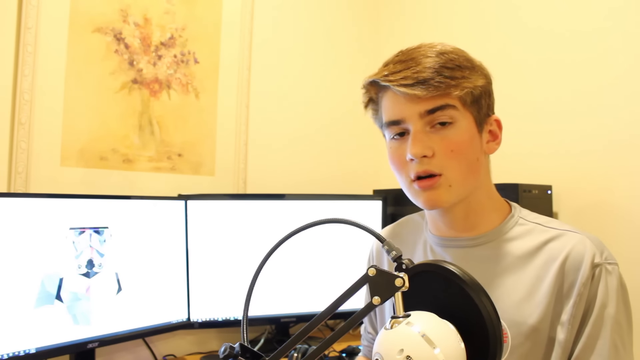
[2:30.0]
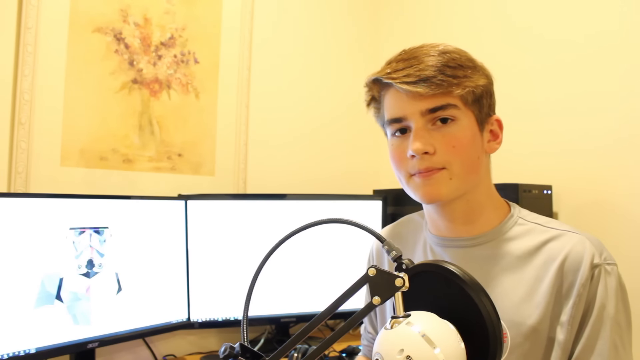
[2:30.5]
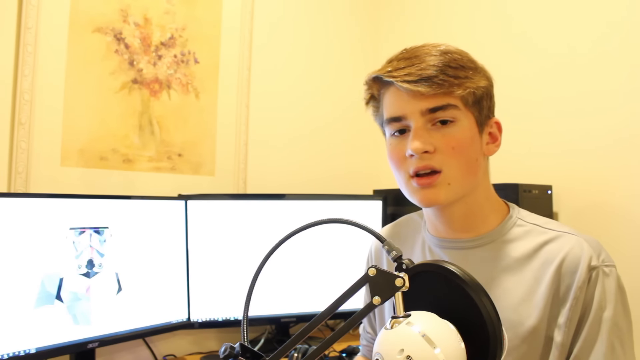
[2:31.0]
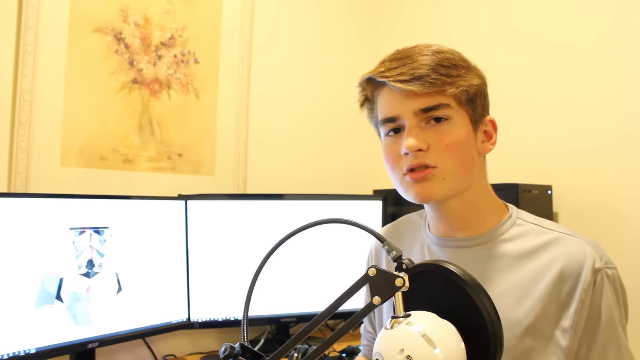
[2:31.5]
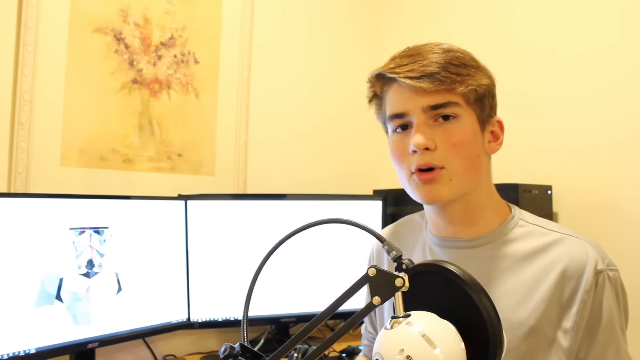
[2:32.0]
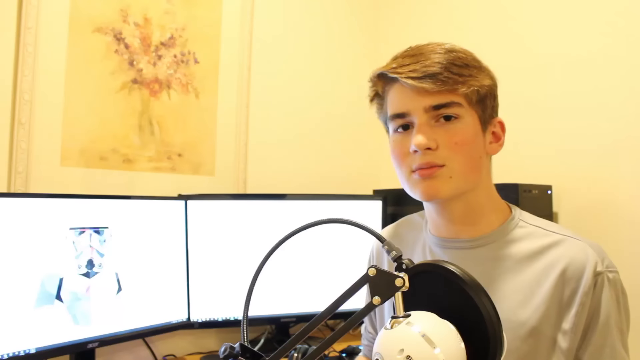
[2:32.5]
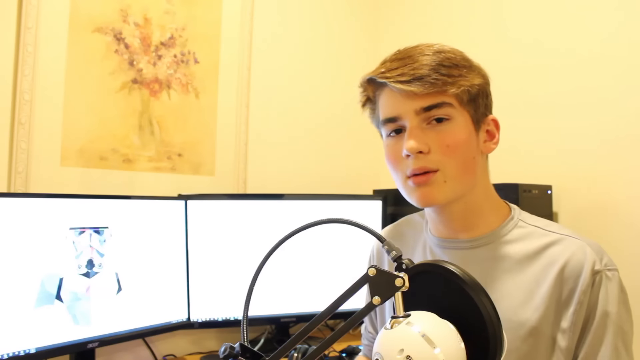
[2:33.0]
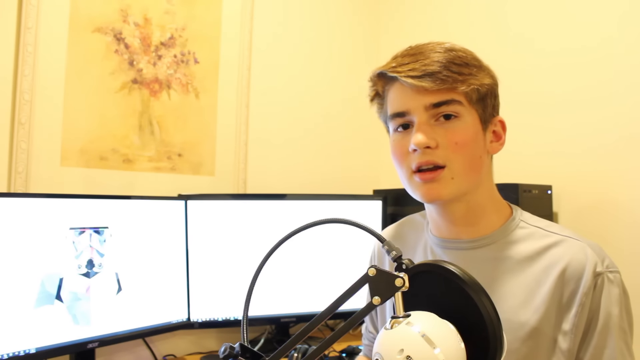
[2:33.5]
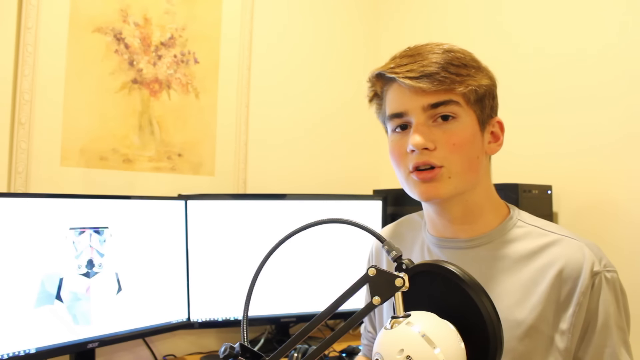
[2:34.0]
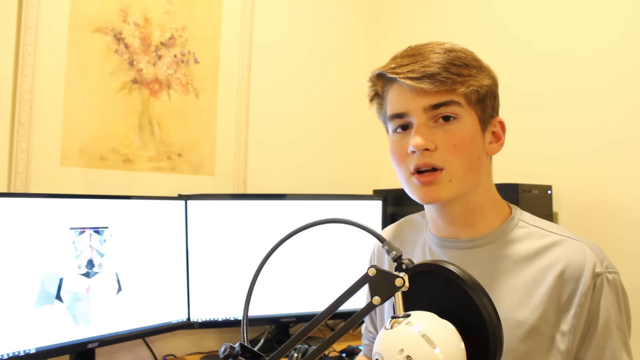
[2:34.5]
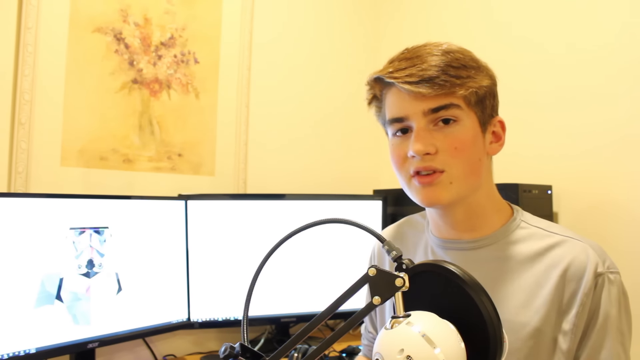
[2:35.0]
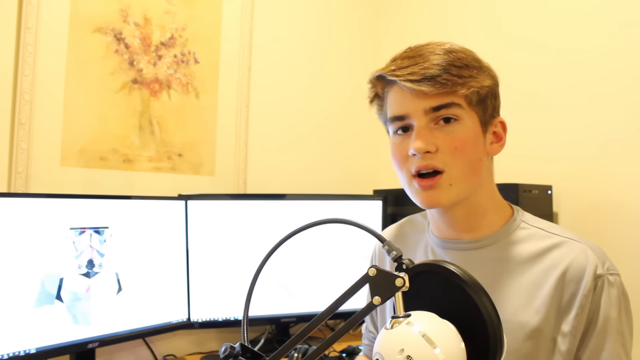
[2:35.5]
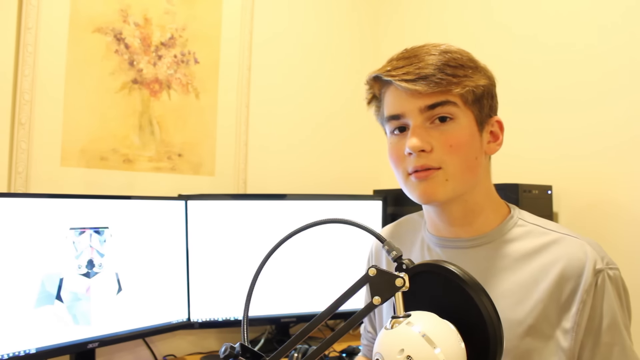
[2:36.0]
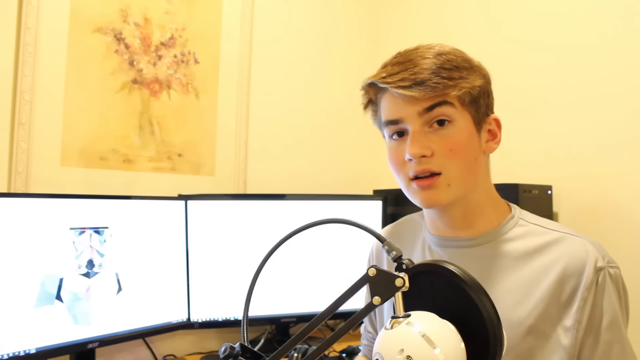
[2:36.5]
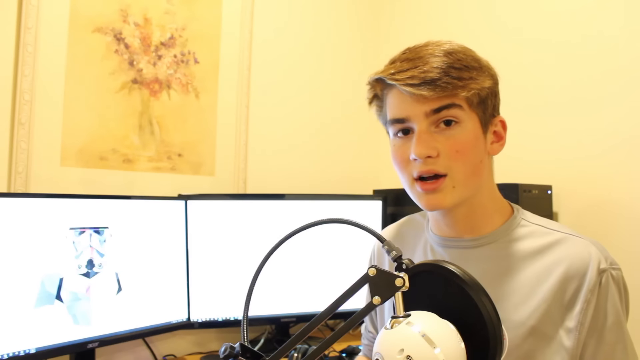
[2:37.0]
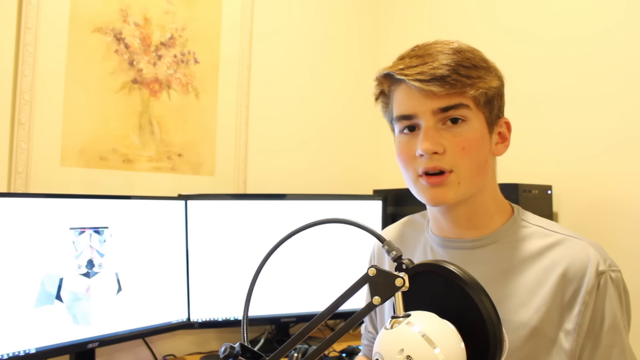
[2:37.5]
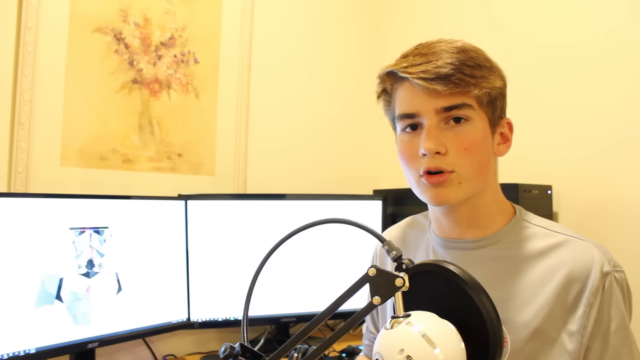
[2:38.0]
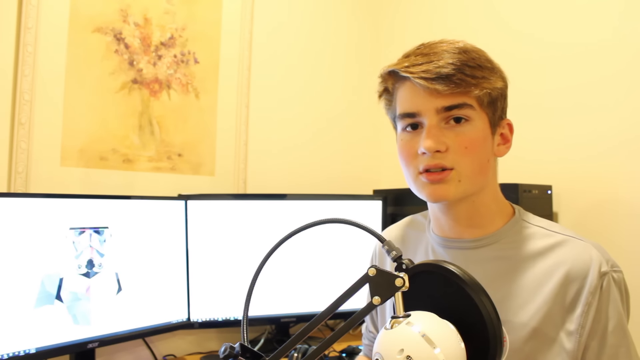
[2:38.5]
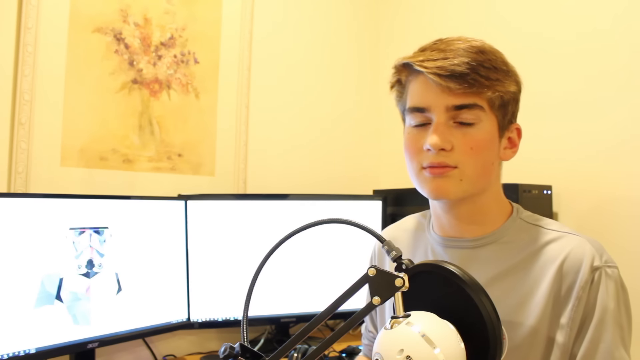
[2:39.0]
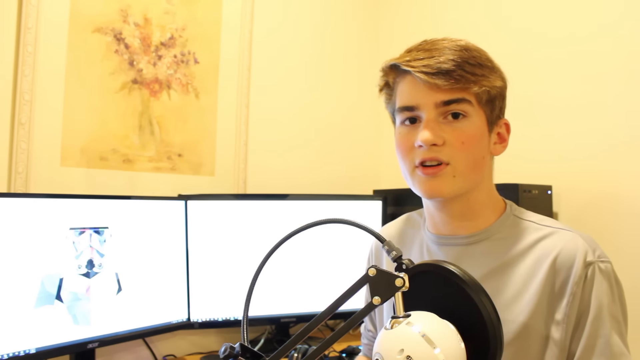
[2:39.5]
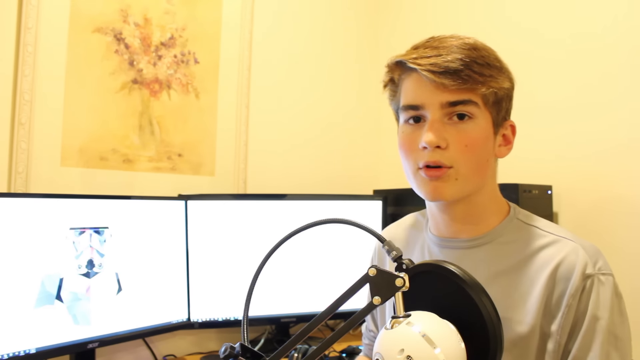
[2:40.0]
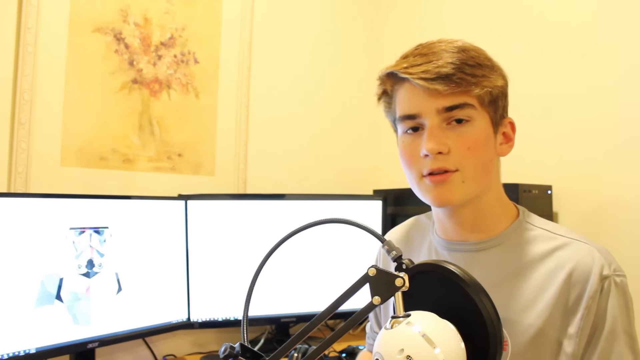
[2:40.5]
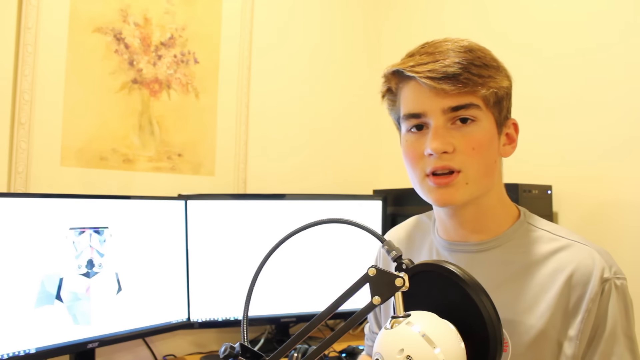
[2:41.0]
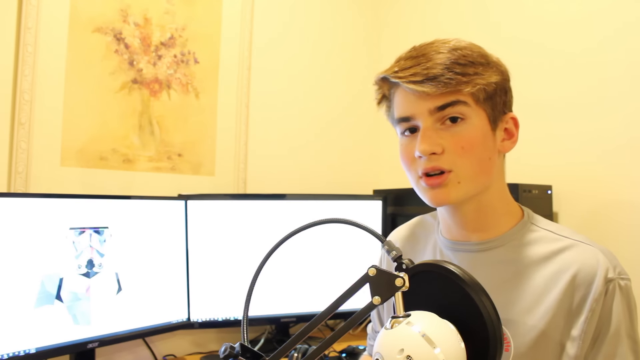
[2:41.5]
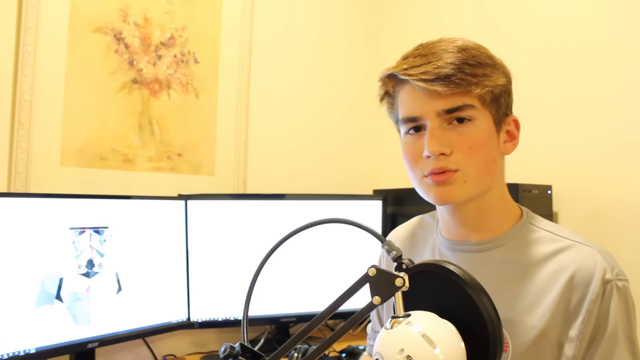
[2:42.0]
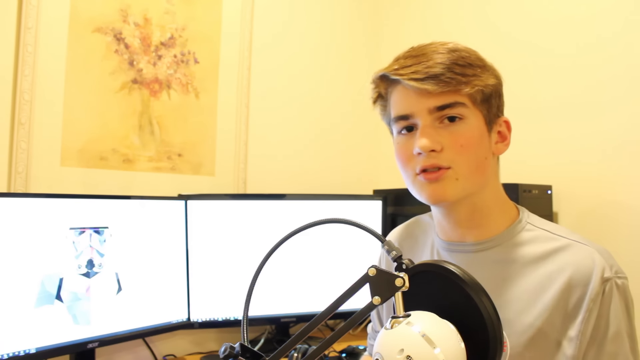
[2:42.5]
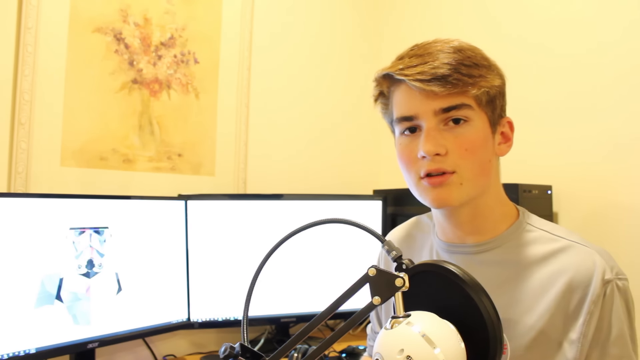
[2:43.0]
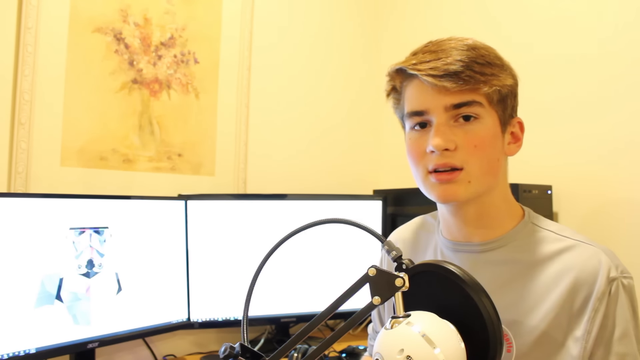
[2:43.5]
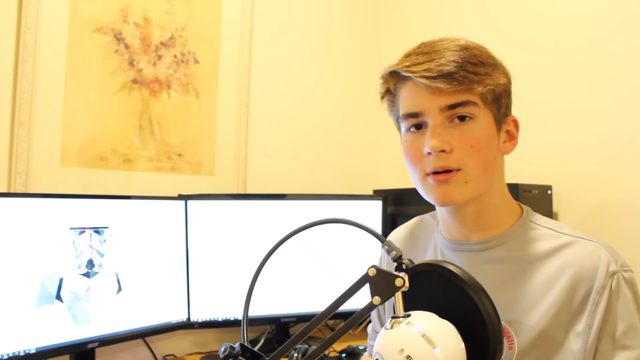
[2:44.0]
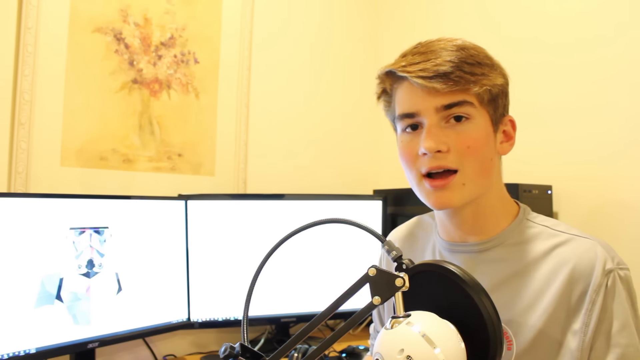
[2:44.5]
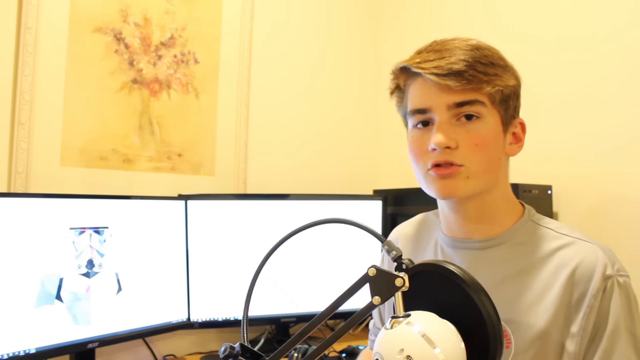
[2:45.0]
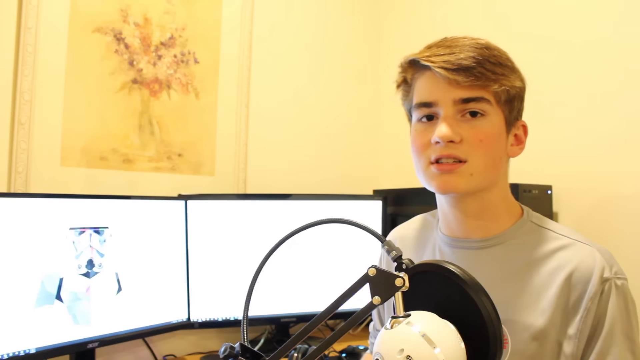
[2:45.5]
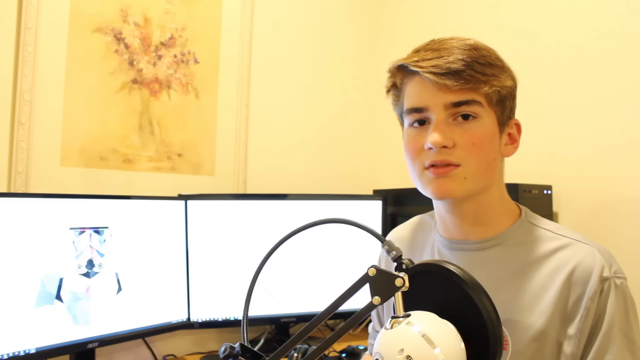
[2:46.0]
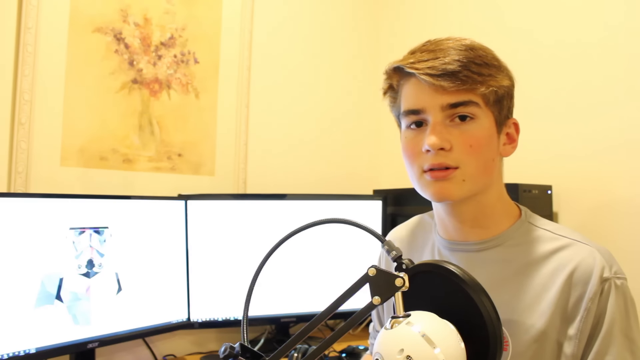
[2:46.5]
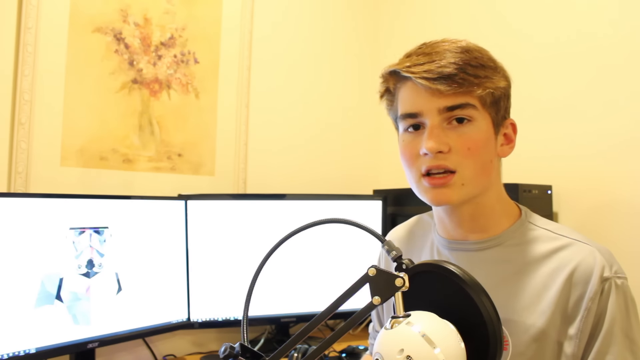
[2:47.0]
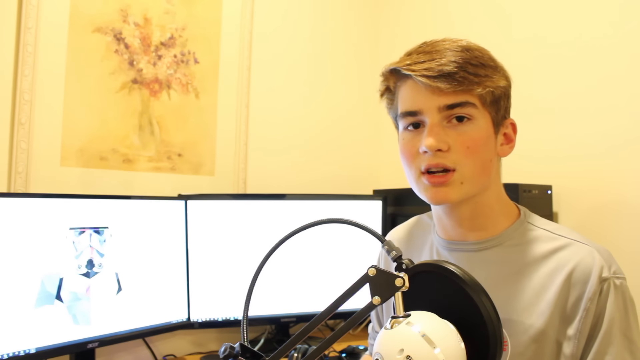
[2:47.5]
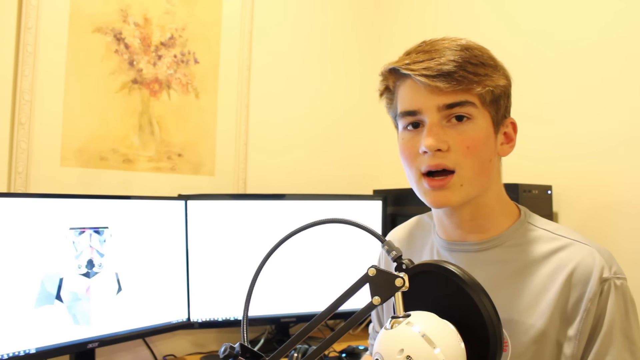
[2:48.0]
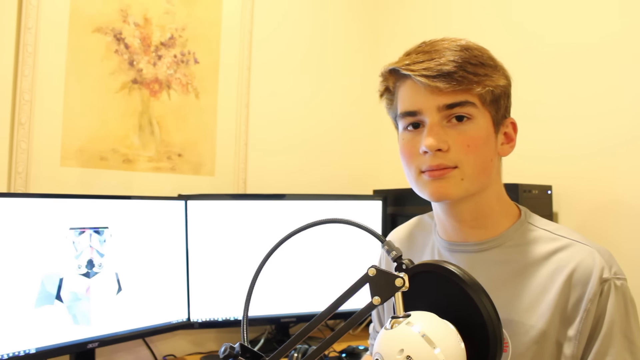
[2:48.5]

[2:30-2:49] A young white man speaks while looking directly at the camera, maintaining eye contact throughout without looking away. He sits fairly still, raises his eyebrows a little, and gestures slightly with his head, but his expression stays fairly neutral as he speaks steadily; his hands are not visible. Behind him, two computer monitors are on a desk that looks like it is made of wood. Both monitors are washed out by the light and hard to see: one might have a stormtrooper as its desktop background, while the other looks completely white, and the start menu and toolbar icons are faintly visible at the bottom of the screen. Some kind of black computer console is on the right side of the monitors. The walls in the back are pale yellow, and on the left side is a painting of flowers in a vase, which looks purple and maybe yellow and red, in muted, soft colors like a pastel painting. The vase is clear with green stems visible, against a darker yellow background than the walls. The room is fairly brightly lit, and the monitors cast a very bright white light on the left side of the man's face.